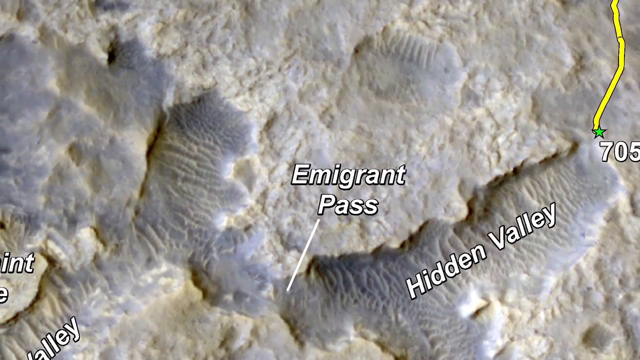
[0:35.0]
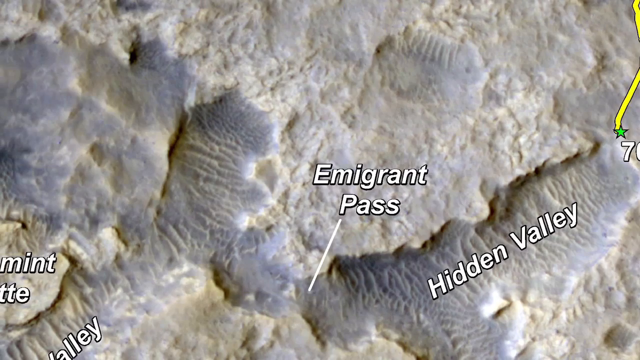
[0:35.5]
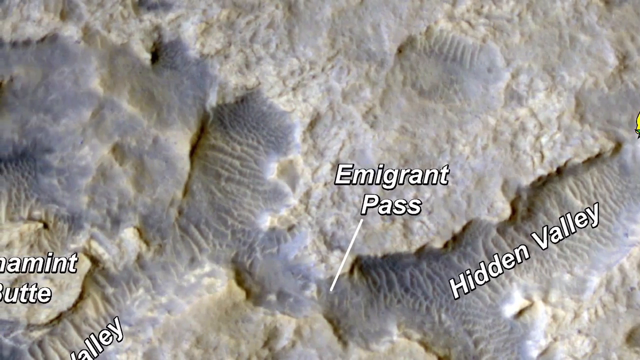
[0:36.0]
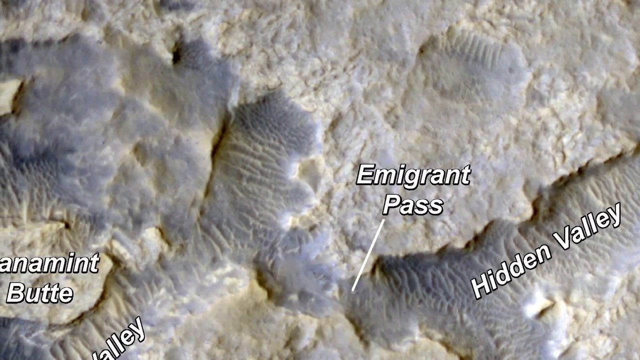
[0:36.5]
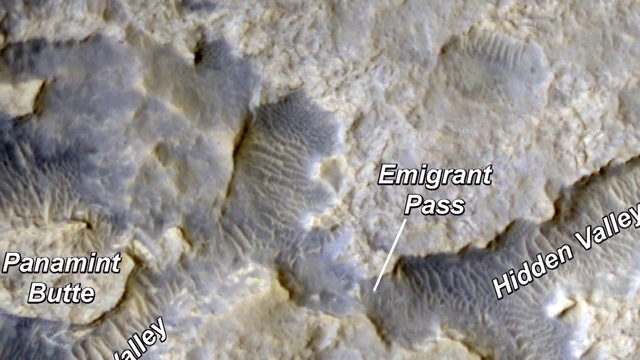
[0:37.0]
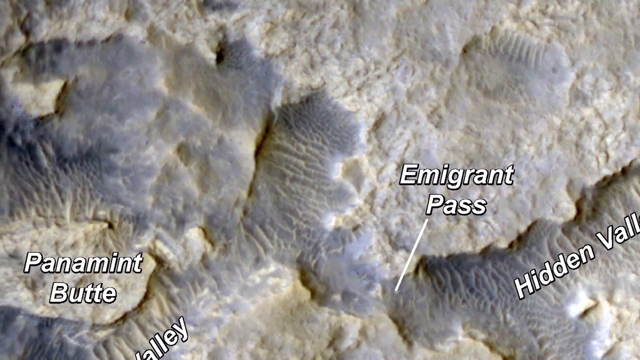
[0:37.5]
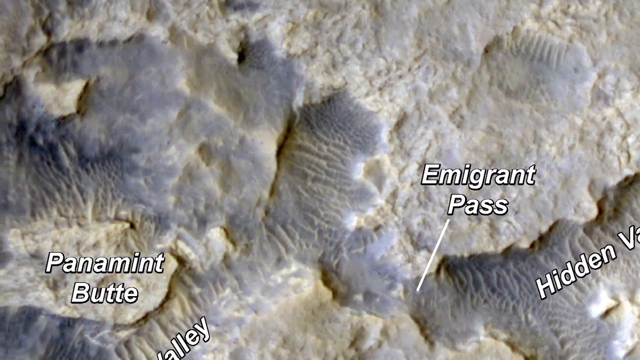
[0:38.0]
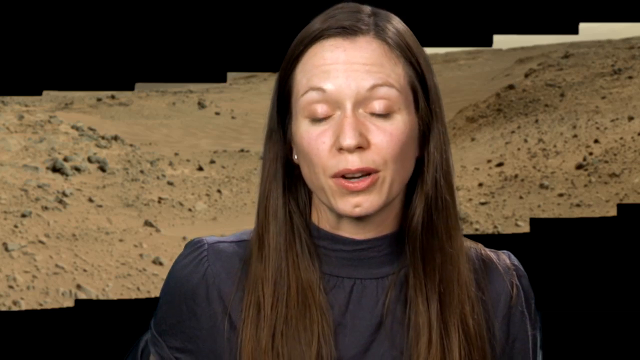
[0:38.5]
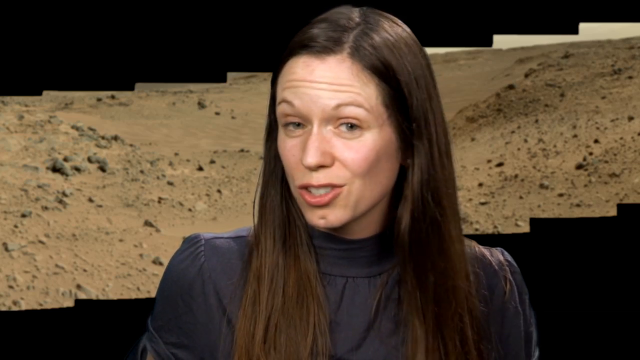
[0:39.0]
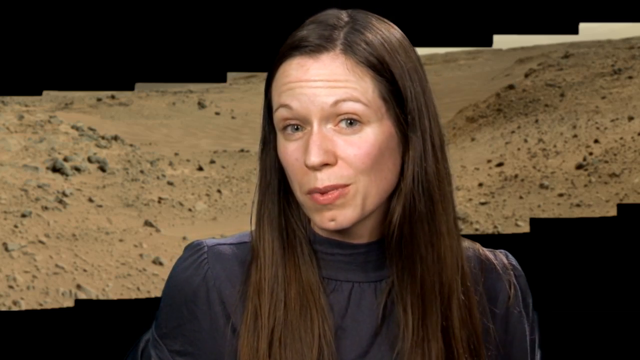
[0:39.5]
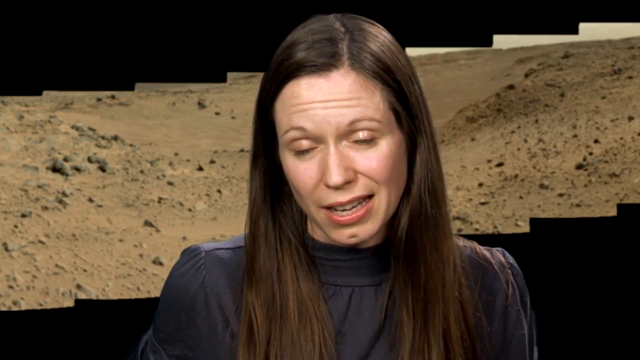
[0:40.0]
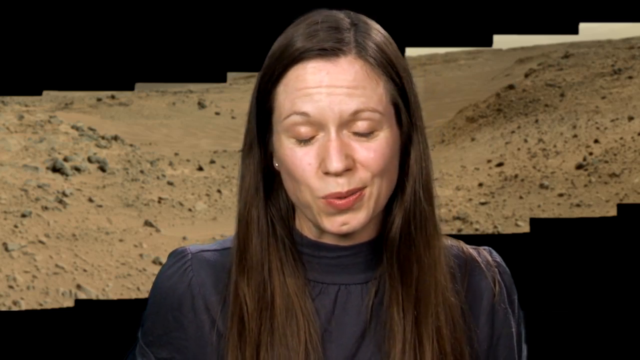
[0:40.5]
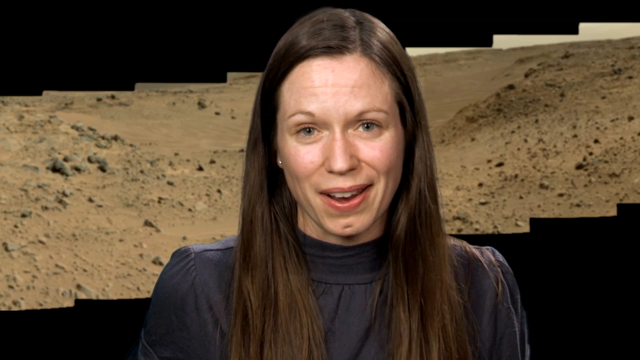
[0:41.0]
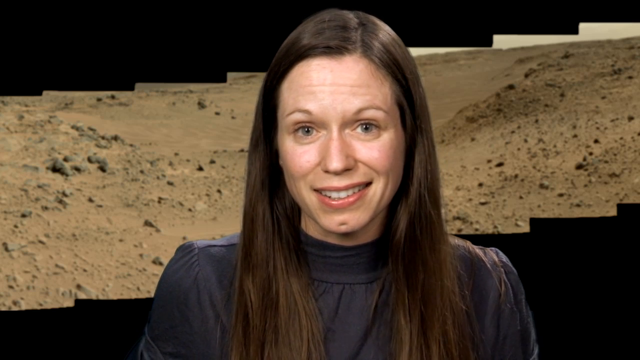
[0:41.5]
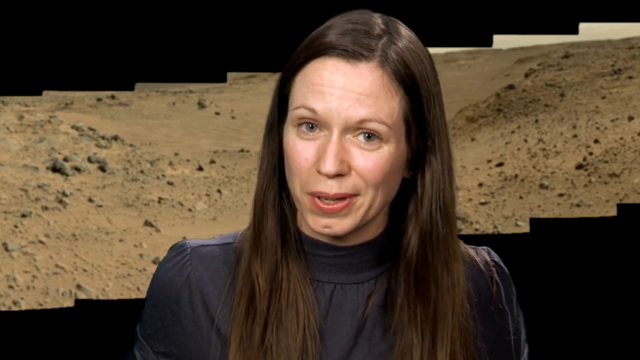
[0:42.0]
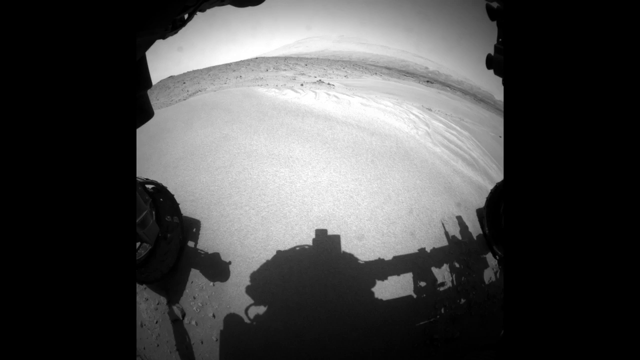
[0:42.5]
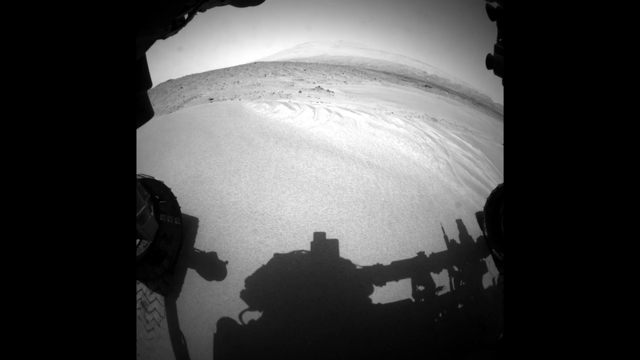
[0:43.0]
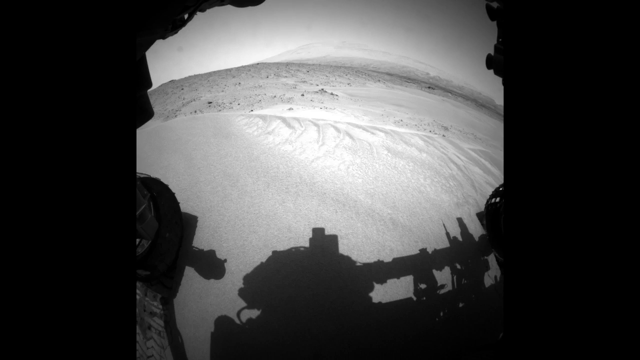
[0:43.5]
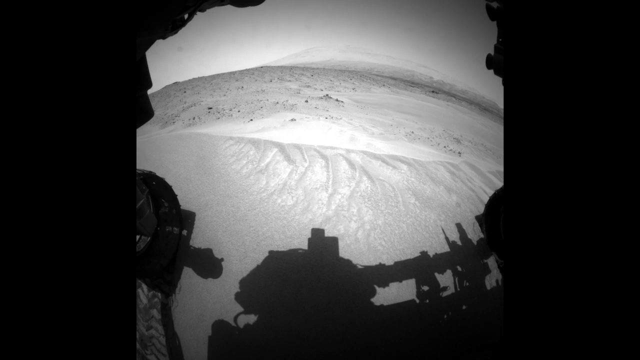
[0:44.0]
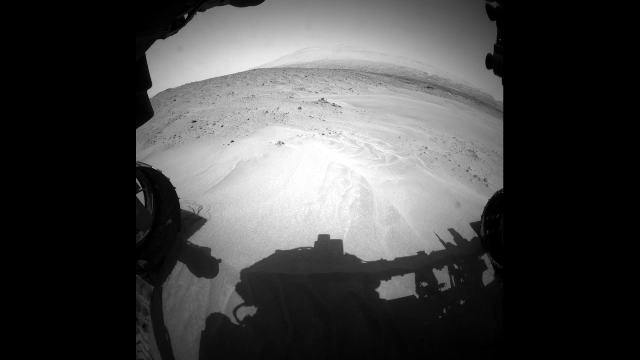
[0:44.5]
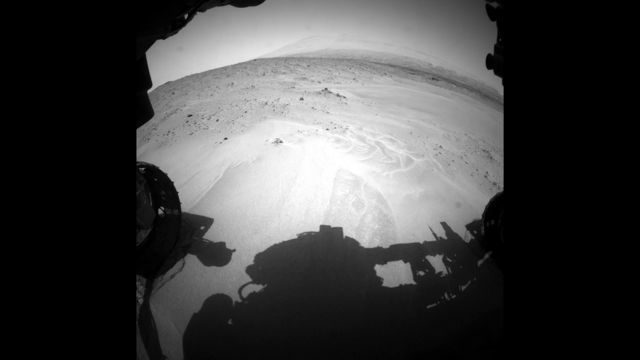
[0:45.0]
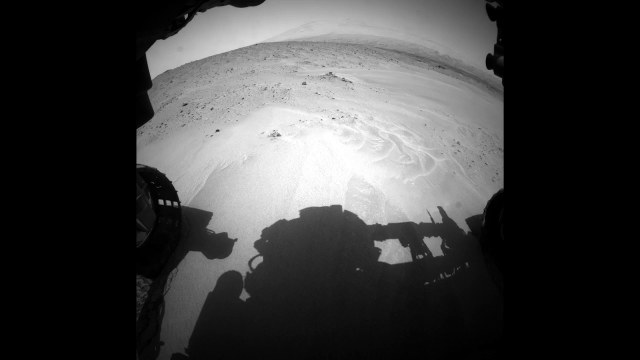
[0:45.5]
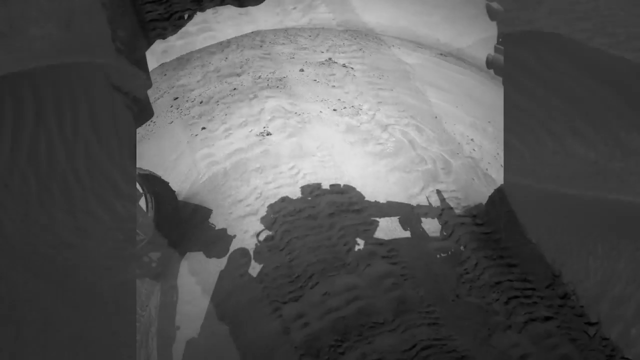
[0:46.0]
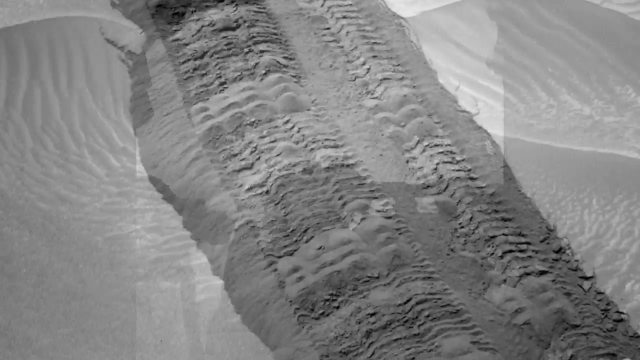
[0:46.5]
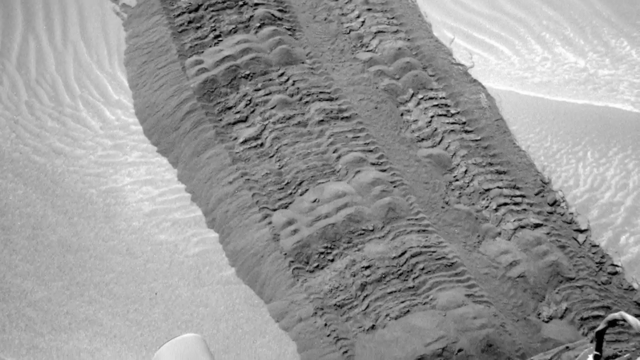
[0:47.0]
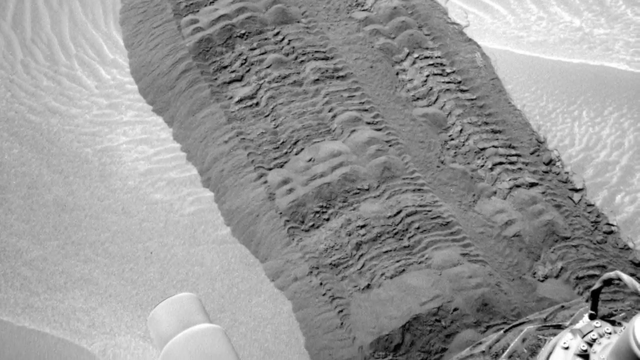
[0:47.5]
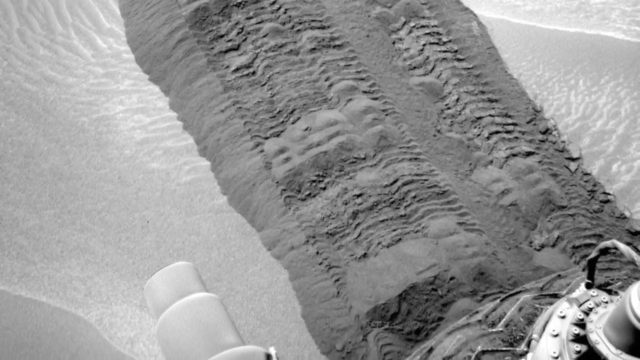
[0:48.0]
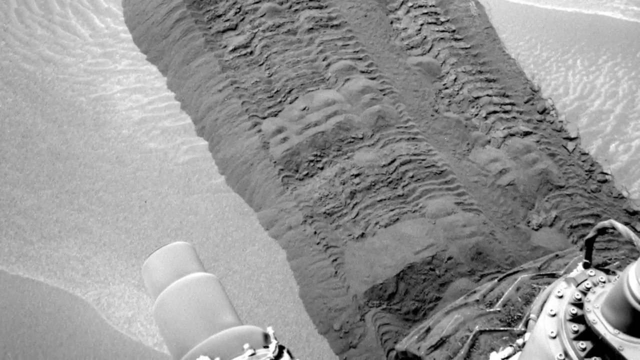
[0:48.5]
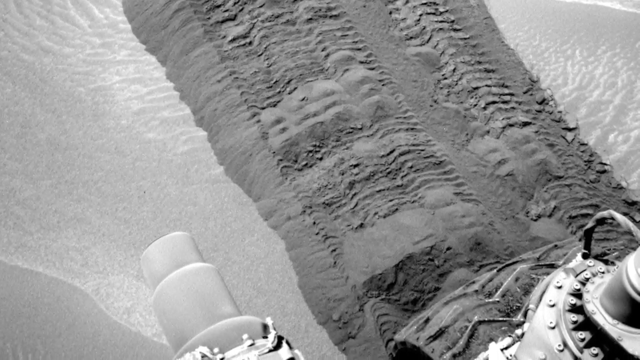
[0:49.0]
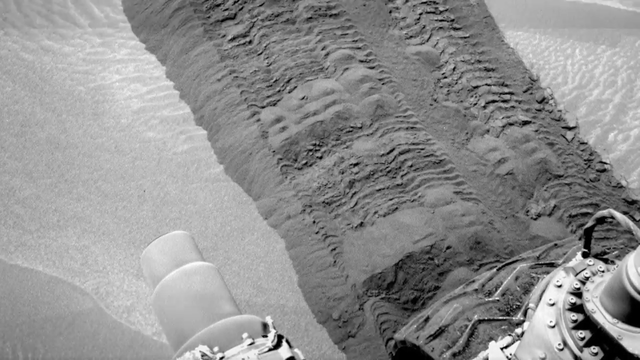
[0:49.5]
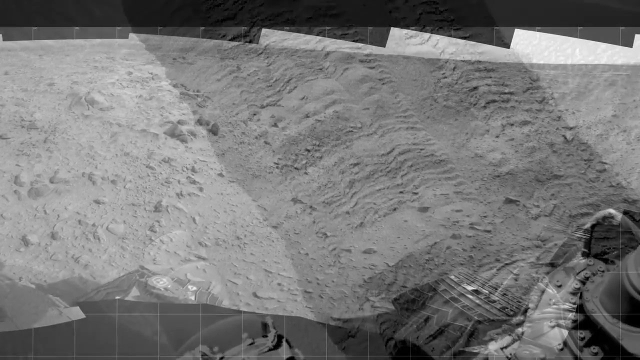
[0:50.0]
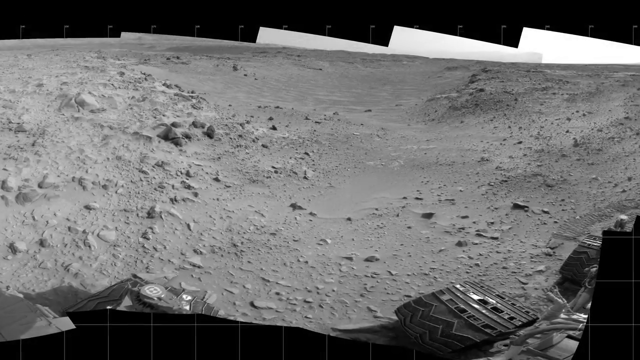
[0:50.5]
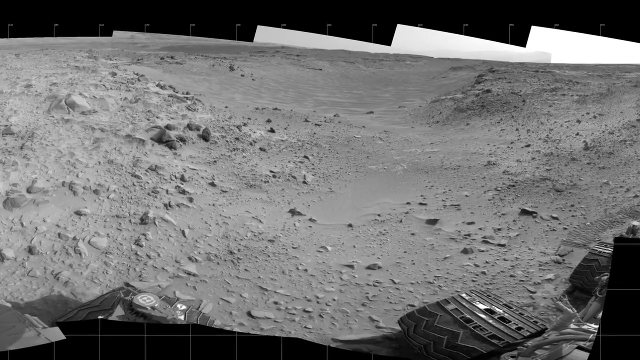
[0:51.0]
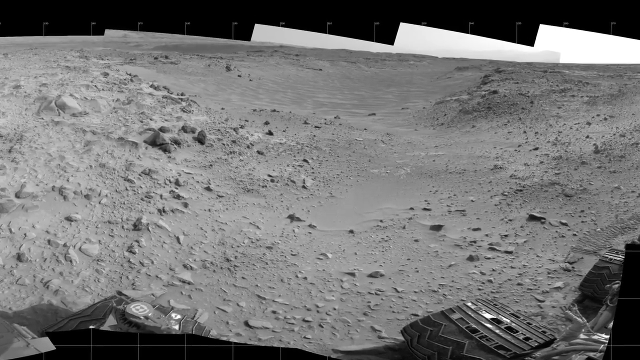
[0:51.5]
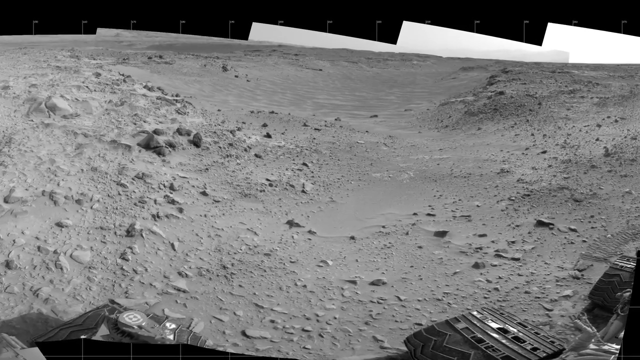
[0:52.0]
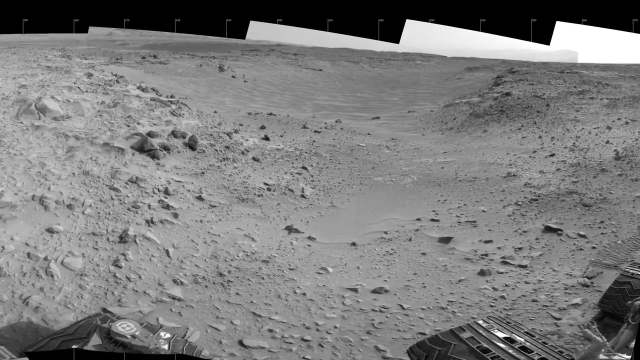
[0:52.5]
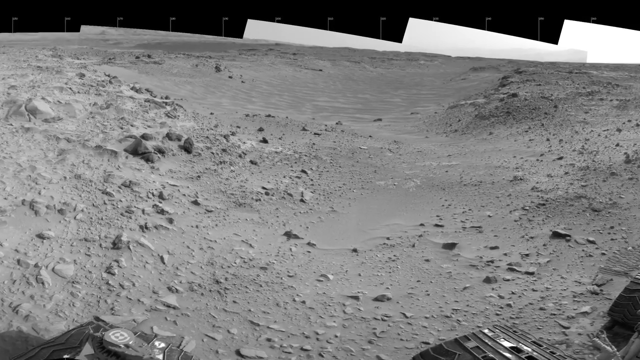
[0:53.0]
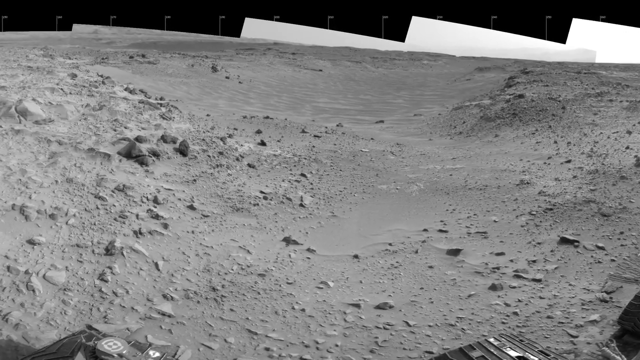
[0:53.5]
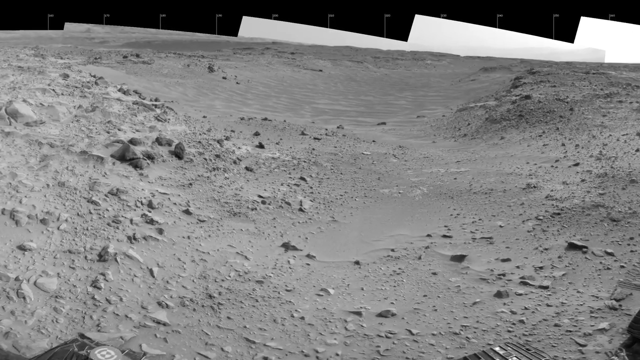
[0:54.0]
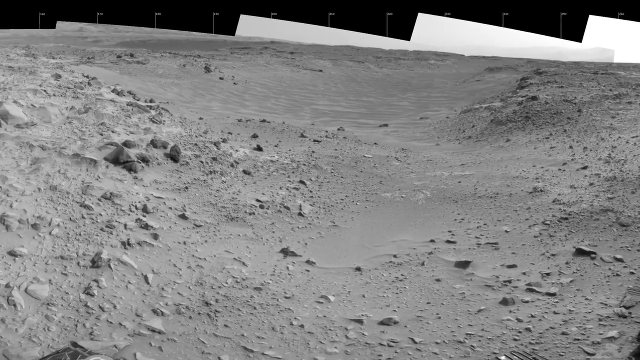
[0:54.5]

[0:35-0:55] Different points are shown on the map, which is a photo rather than an illustration. The video cuts back to the newsroom-style studio, where the woman narrates to the camera. This time there is no title card with her name, but a graphic behind her shows another photo of the rugged terrain the rover would travel. Next comes what looks like a 360 stitched-together photo showing the tire tracks the rover leaves as it crosses terrain. The video cuts to more footage shot from the rover's perspective. This footage is all in black and white, as are the photo of the tracks and the 360 photo. The 360 nature of the photos is evident from their very jagged top and bottom edges.